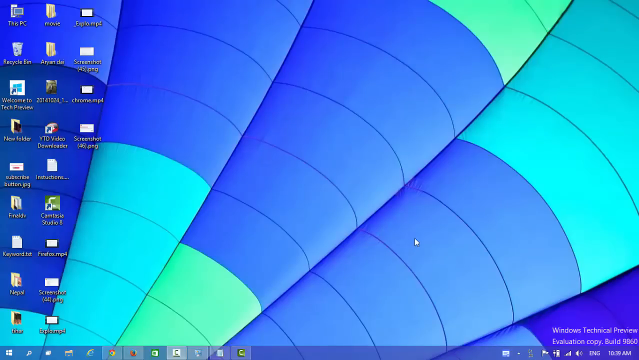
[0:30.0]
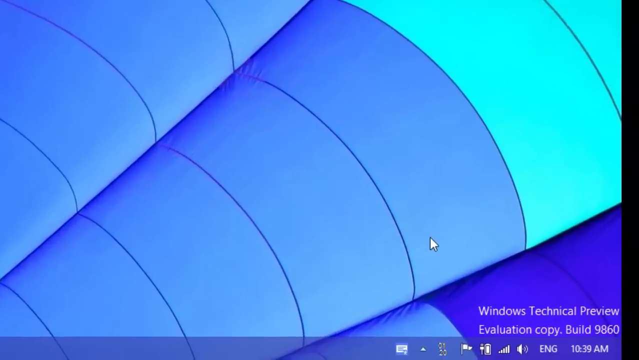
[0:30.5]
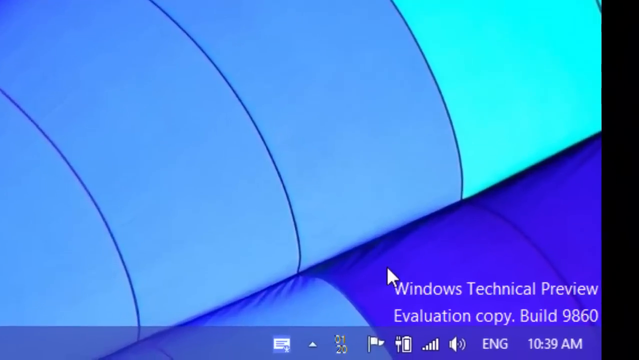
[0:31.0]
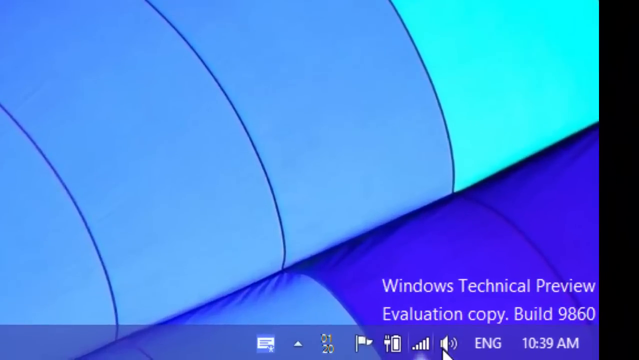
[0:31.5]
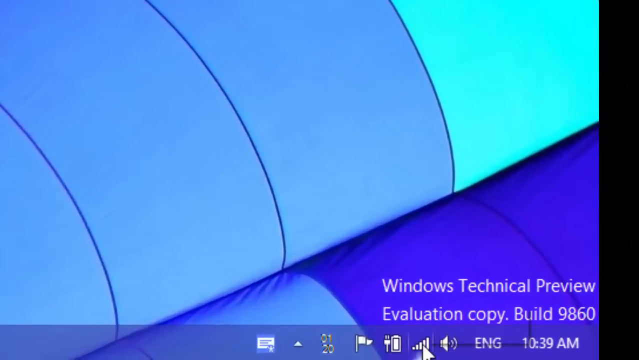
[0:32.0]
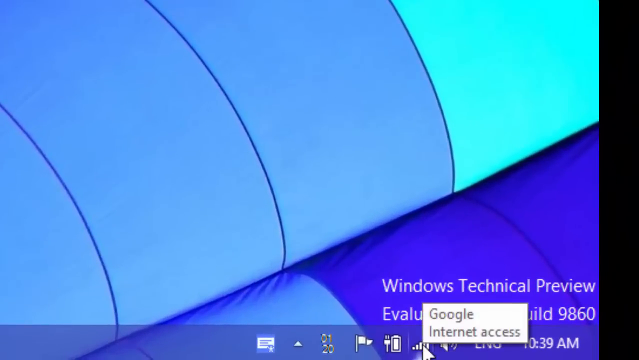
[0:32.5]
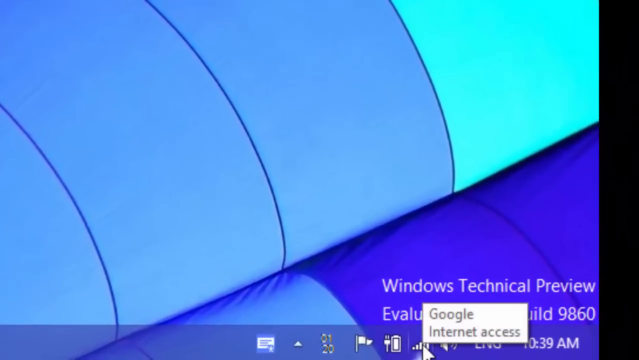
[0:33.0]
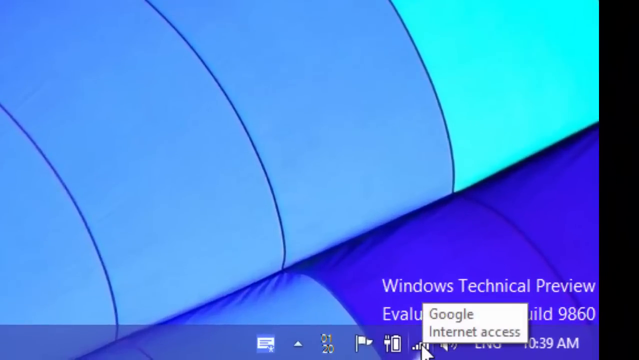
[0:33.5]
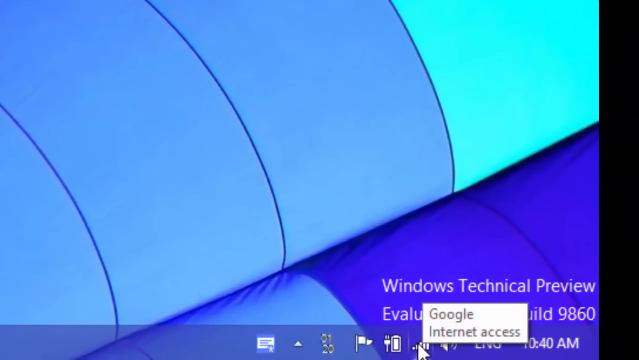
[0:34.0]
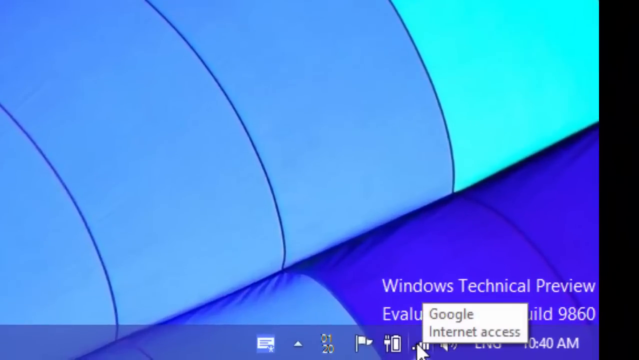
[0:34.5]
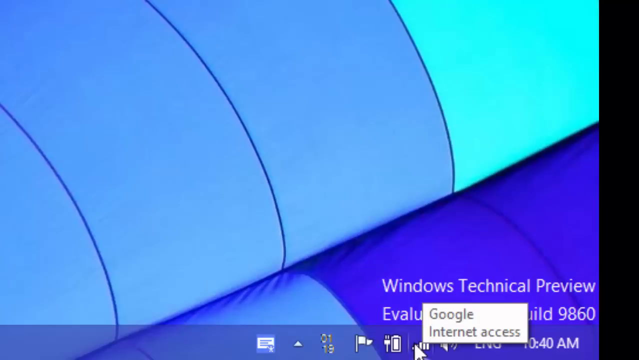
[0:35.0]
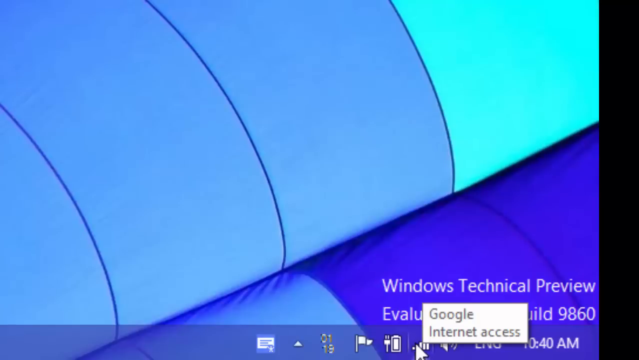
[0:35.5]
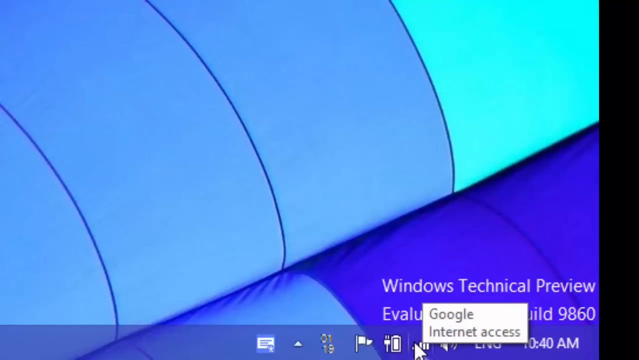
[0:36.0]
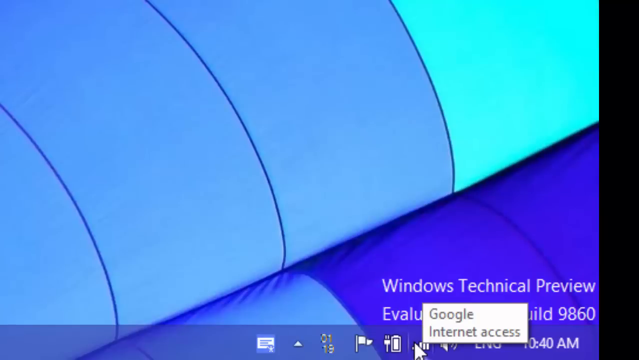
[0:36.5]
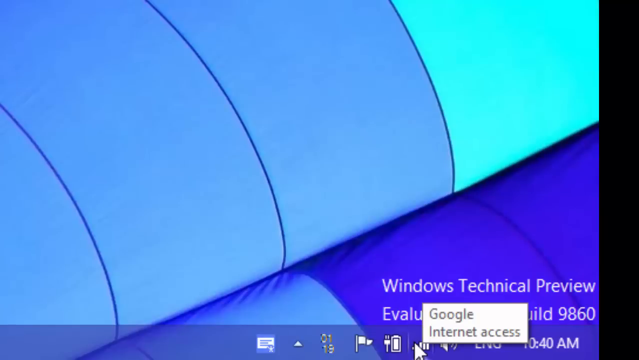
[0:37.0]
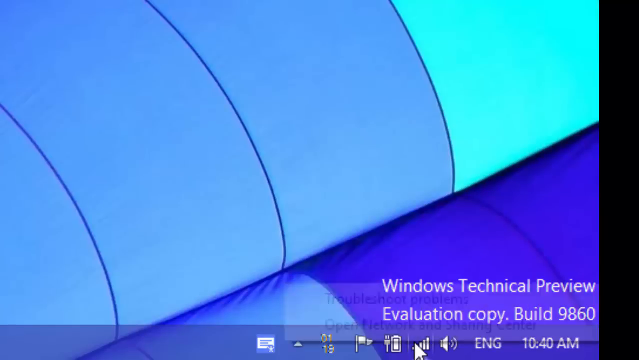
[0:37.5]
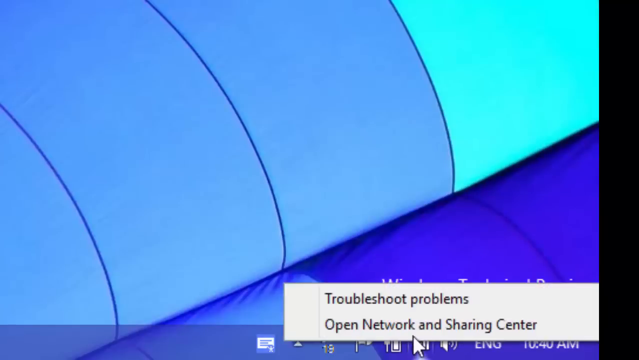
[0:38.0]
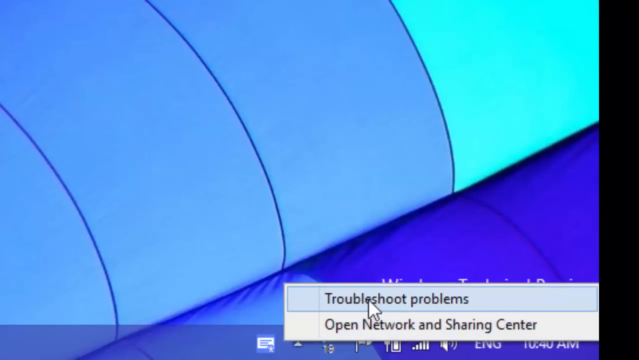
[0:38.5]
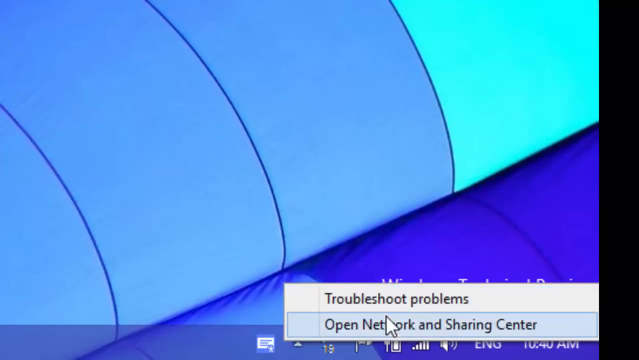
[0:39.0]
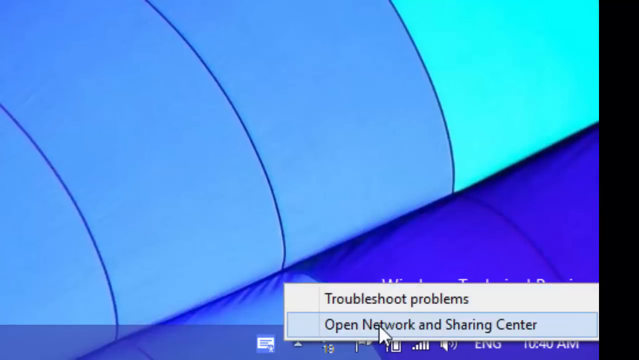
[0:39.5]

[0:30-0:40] The Windows desktop appears. In the lower right, a message says this is a Windows technical preview and evaluation copy. The desktop wallpaper looks like the inside of a parachute and is very colorful, with light blue, dark blues, light greens and some purples. Several icons are on the far left of the desktop. The person zooms into the taskbar at the bottom right and mouses over the Wi-Fi icon, which shows "Google Internet access." They click the icon, bringing up a menu, and the mouse points out options to troubleshoot problems or open the network and sharing center. They click on open the network and sharing center.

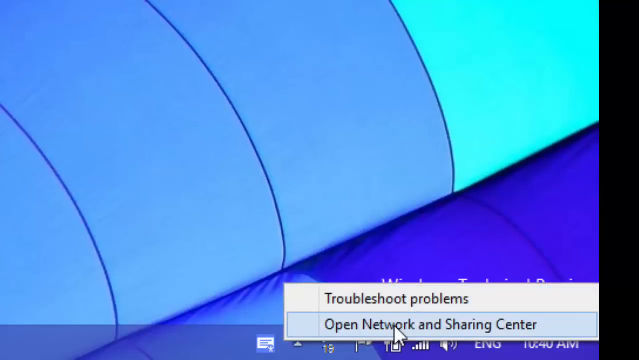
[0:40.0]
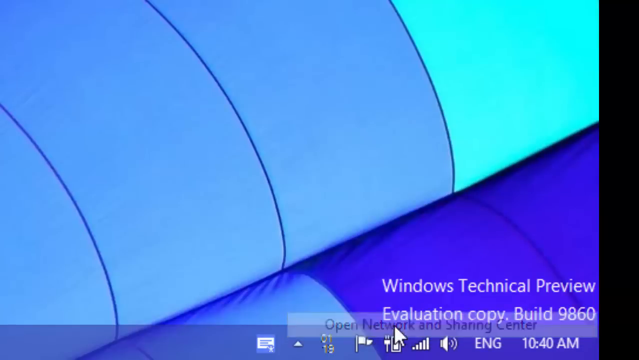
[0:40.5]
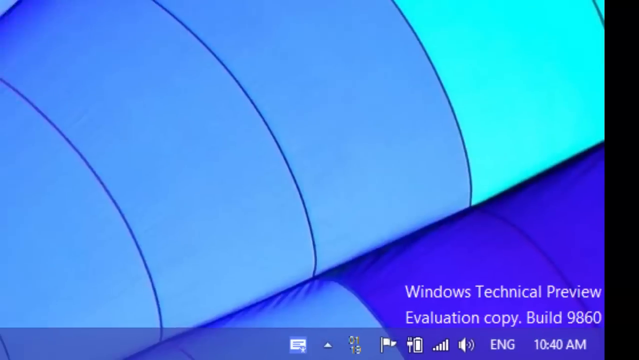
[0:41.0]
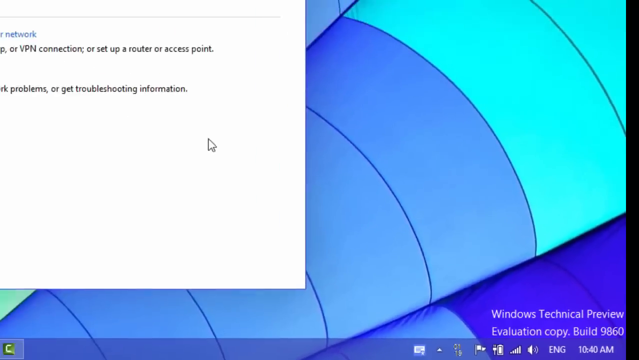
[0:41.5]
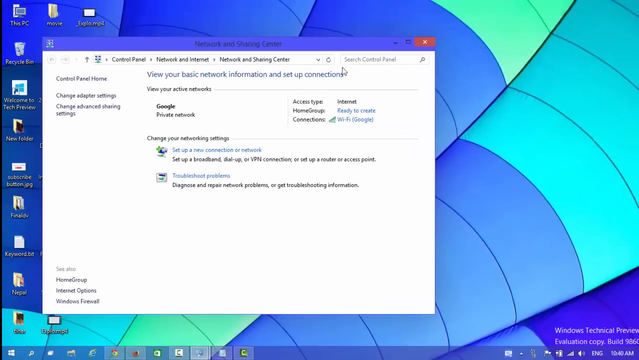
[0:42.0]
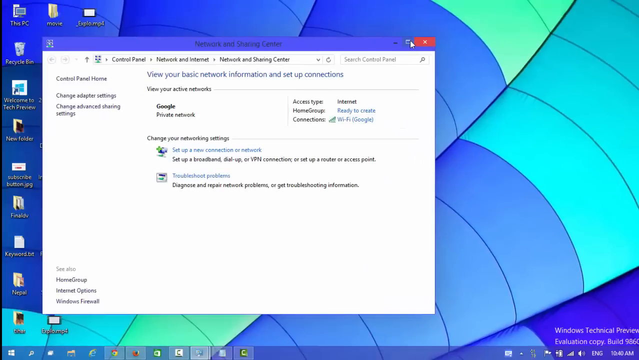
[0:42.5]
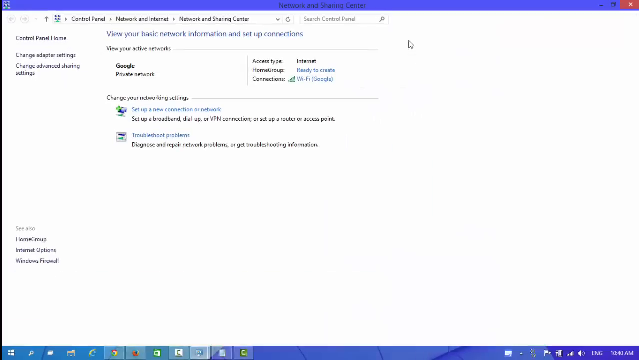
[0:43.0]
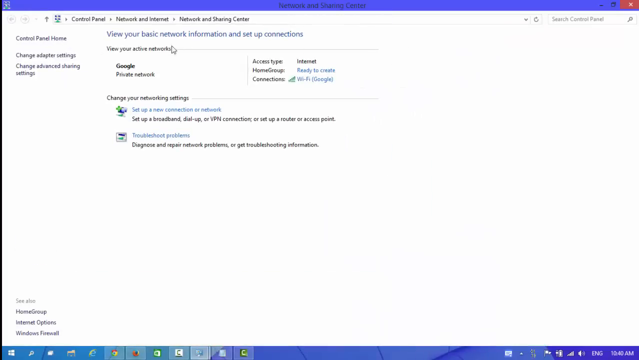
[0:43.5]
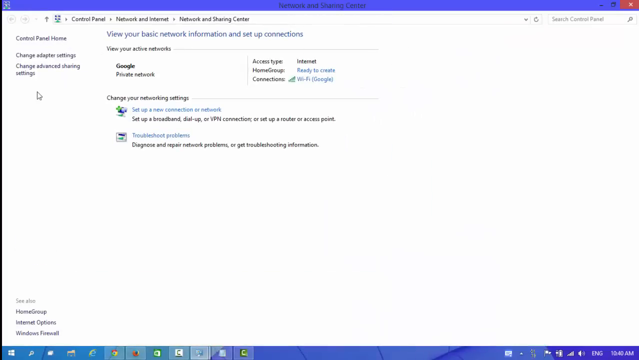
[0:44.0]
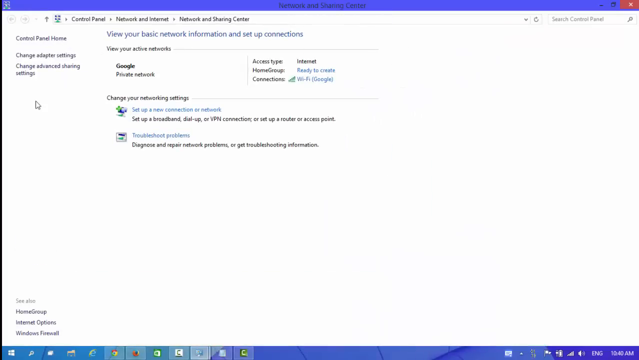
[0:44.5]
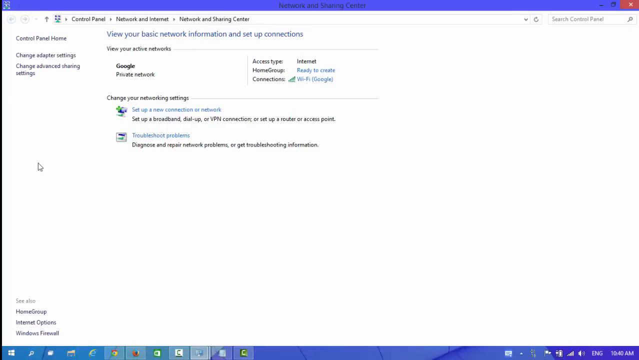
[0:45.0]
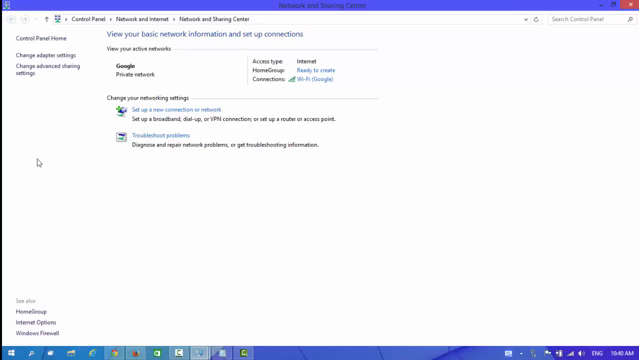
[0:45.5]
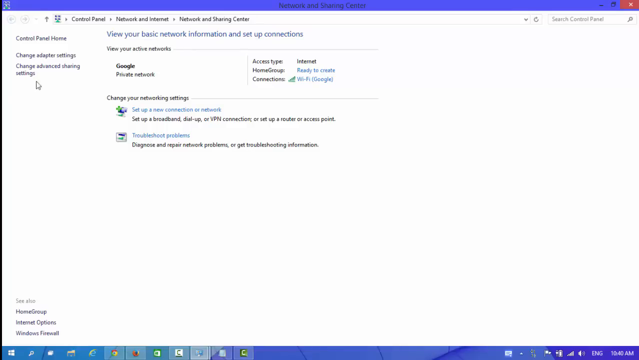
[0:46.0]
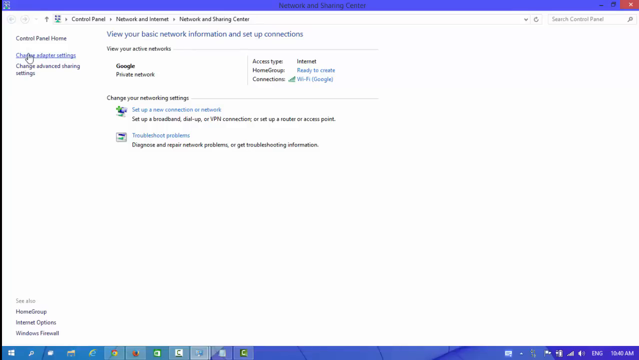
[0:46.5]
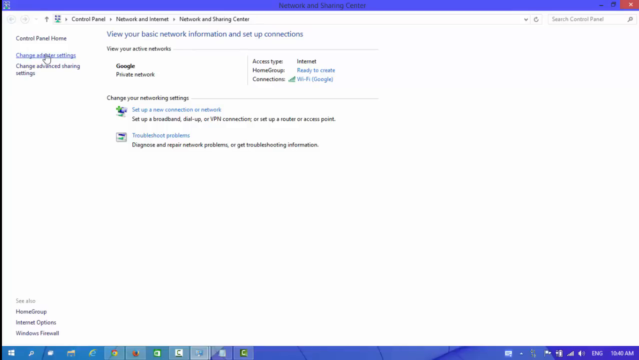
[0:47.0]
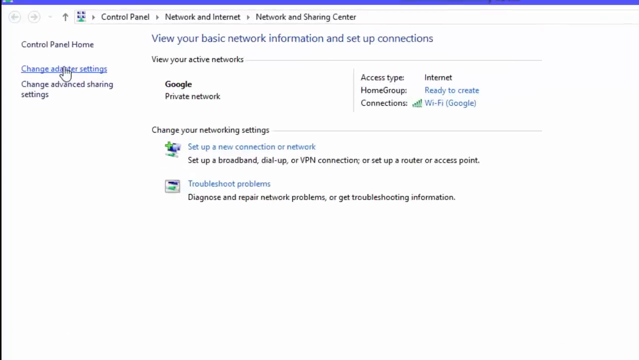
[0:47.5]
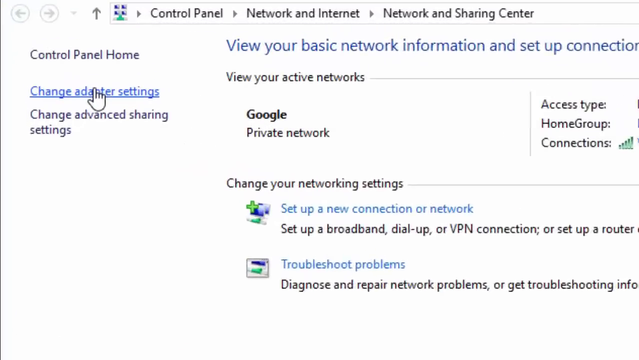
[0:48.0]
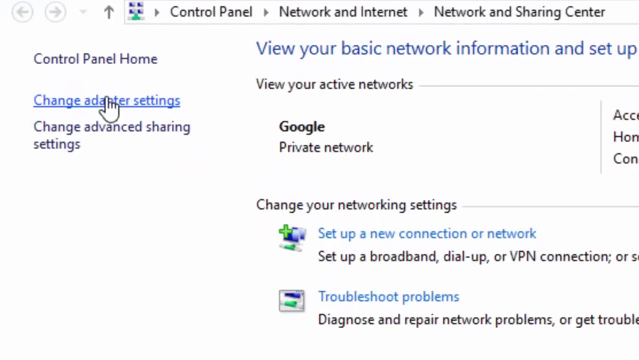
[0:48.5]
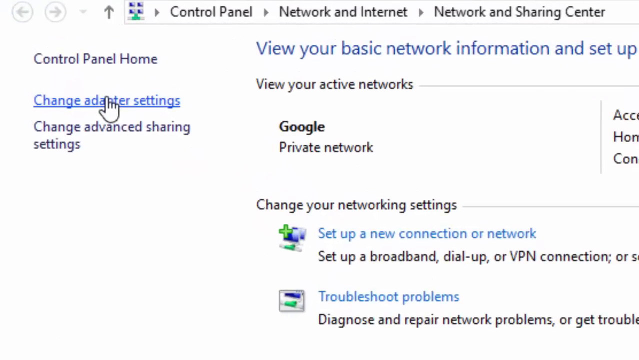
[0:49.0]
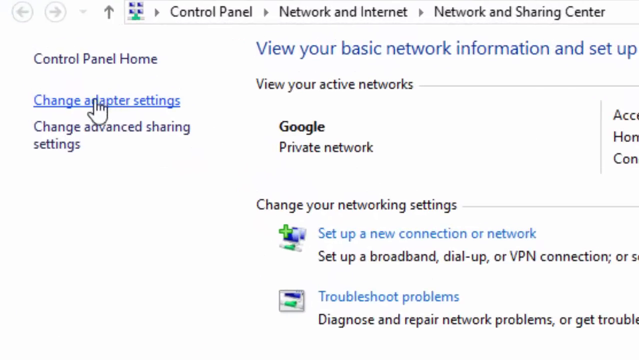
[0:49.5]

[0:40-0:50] The control panel opens to the network and sharing center page. The headline says "view your basic network information and set up connections." Below that it says "view your active networks," showing a Google private network with access type internet. The user mouses over the options on the left and highlights the one that says "change adapter settings," then zooms in on it. The mouse keeps hovering and moving back and forth, left and right, over that menu option.